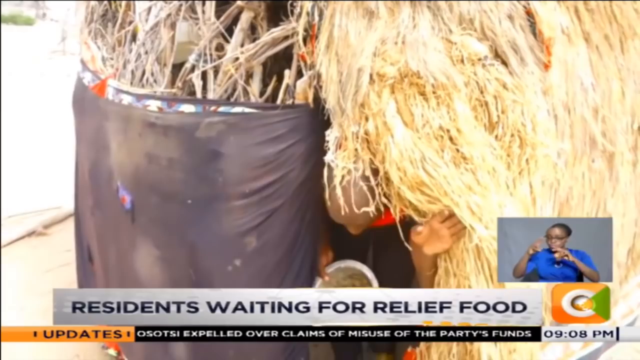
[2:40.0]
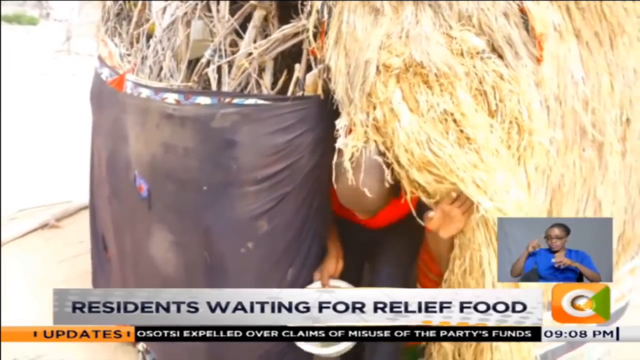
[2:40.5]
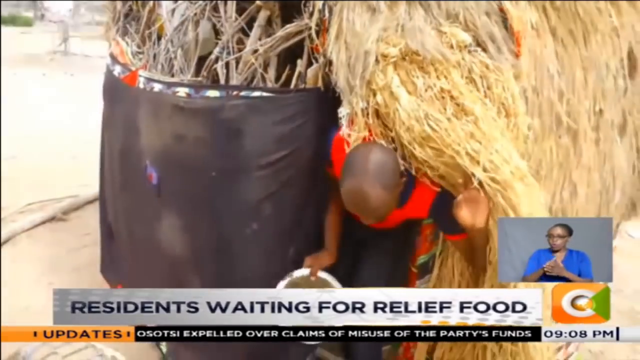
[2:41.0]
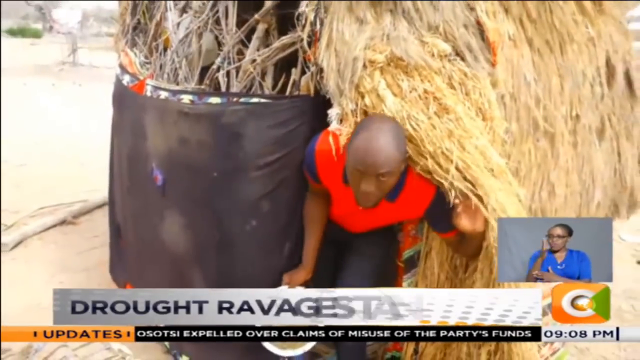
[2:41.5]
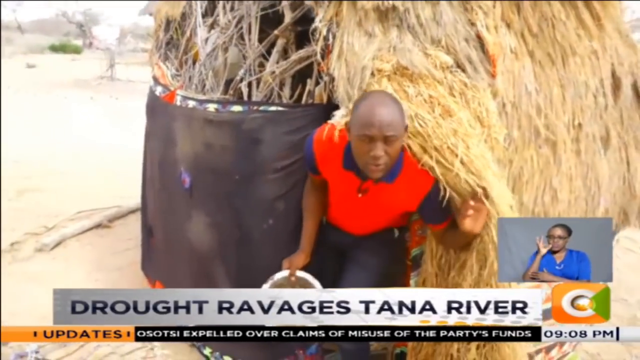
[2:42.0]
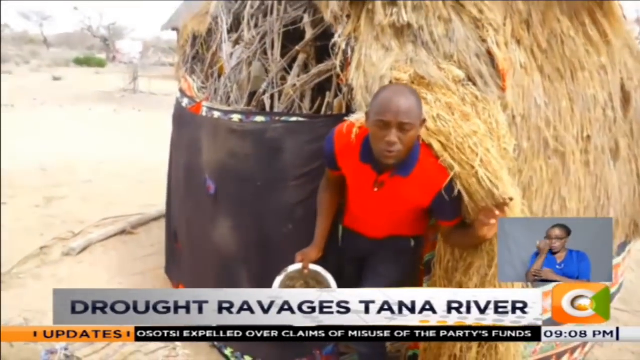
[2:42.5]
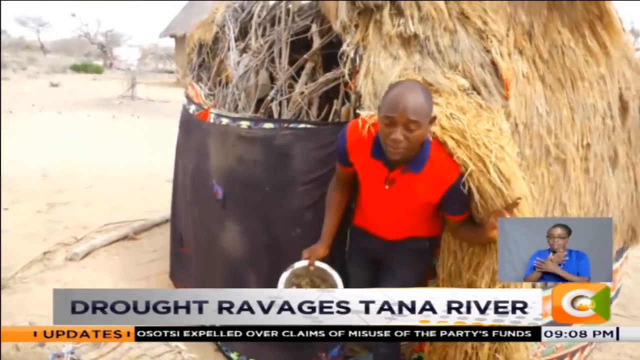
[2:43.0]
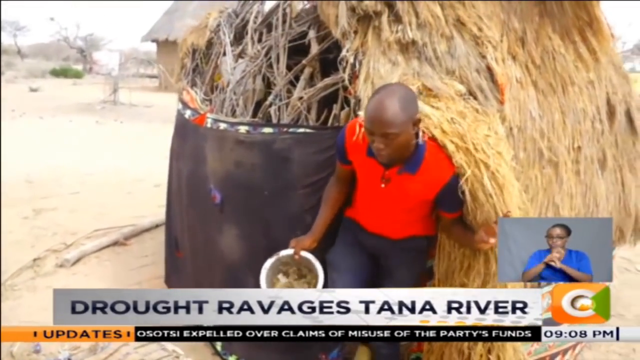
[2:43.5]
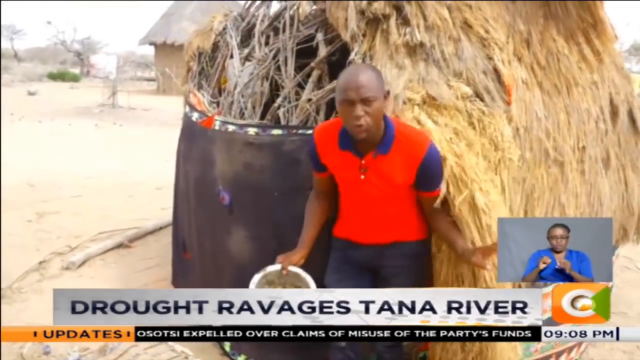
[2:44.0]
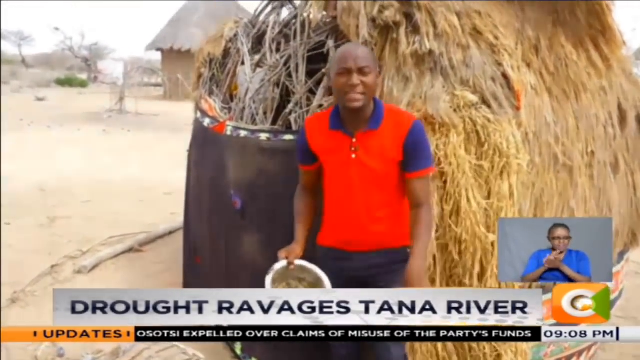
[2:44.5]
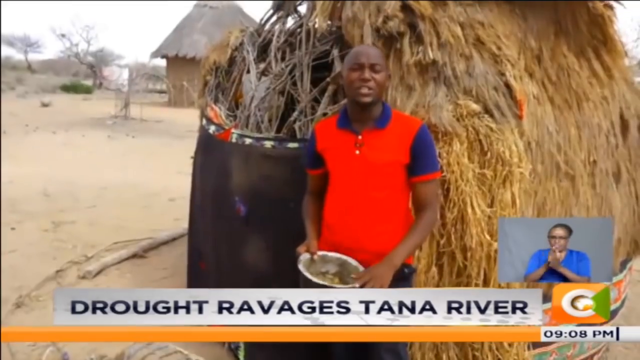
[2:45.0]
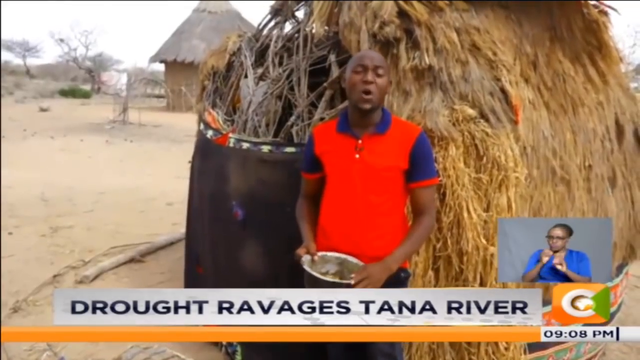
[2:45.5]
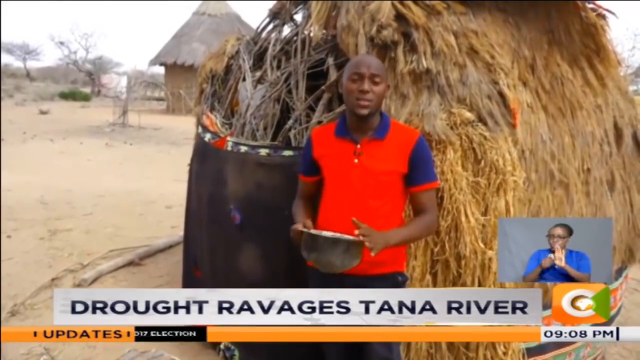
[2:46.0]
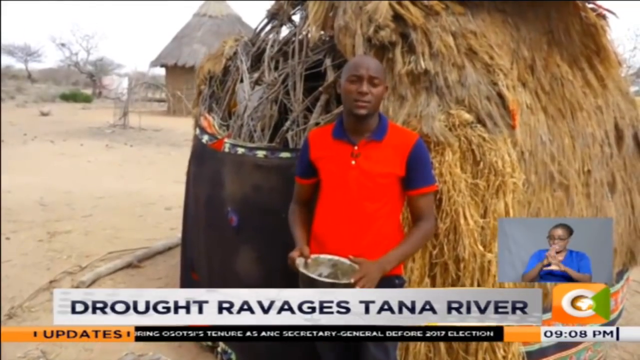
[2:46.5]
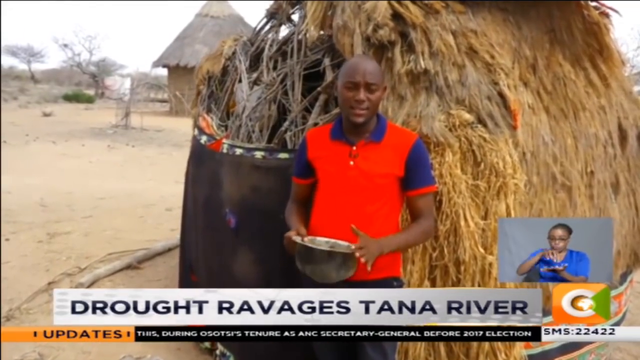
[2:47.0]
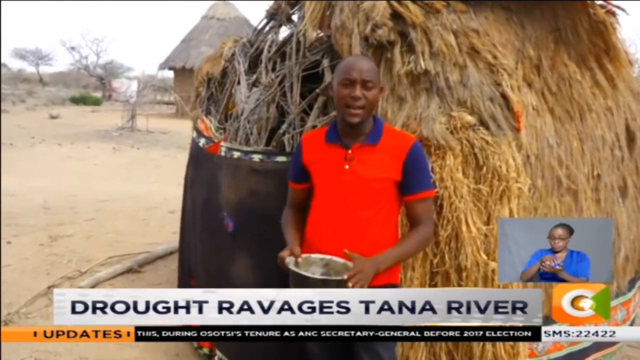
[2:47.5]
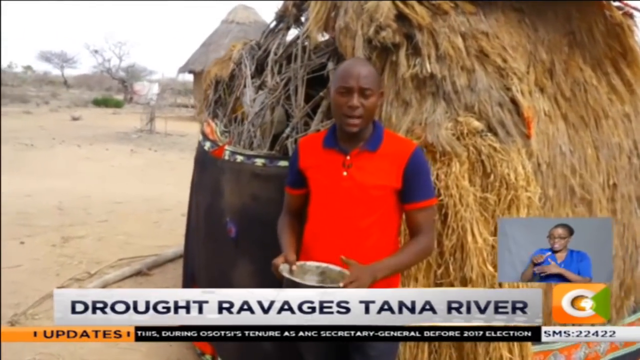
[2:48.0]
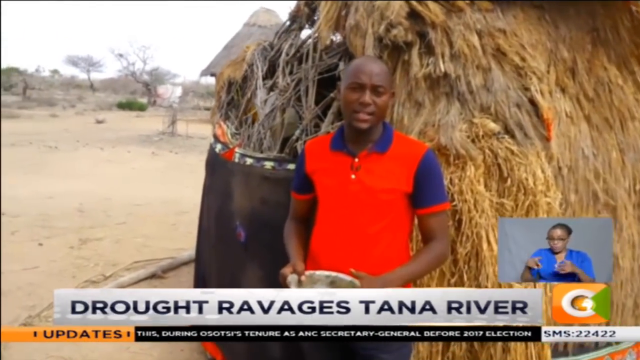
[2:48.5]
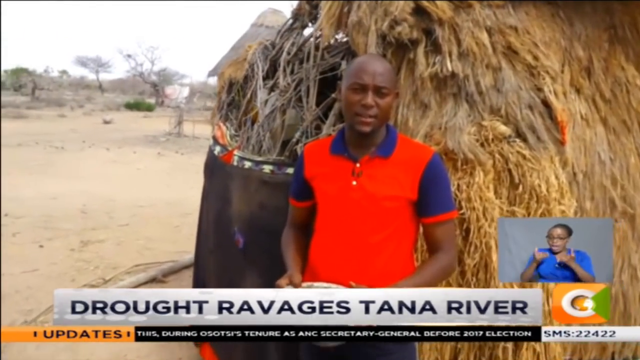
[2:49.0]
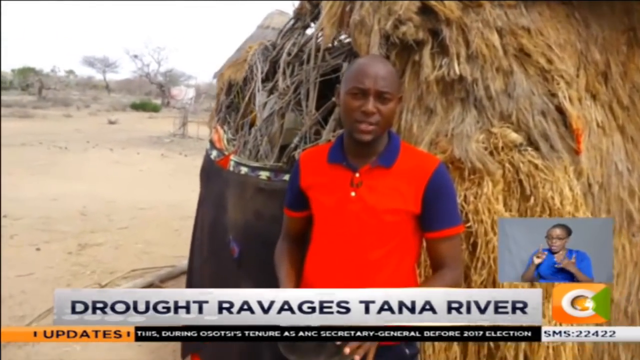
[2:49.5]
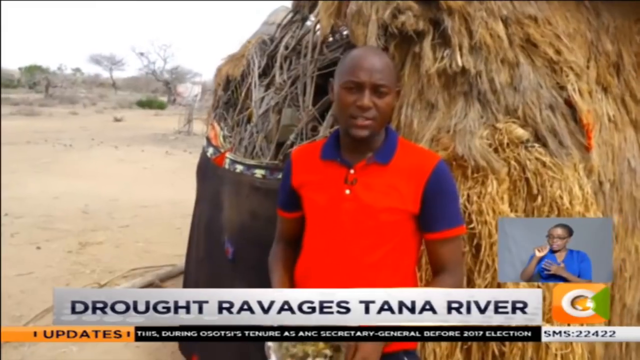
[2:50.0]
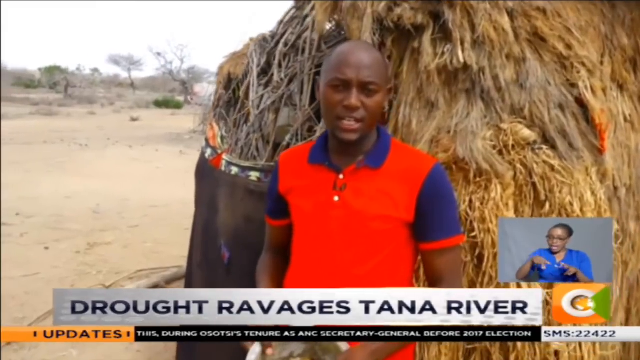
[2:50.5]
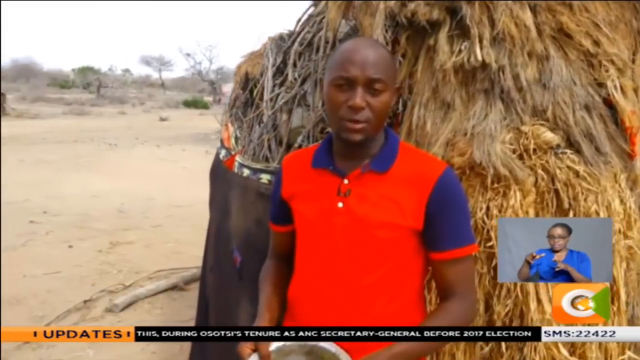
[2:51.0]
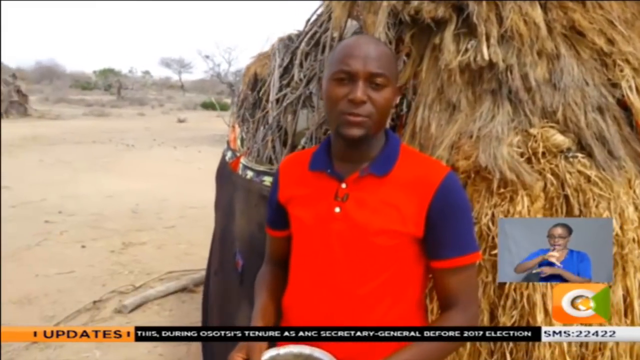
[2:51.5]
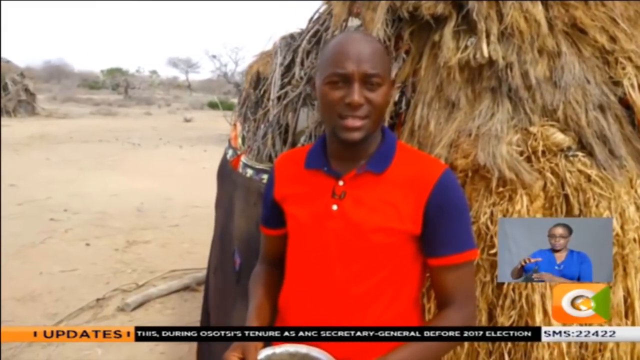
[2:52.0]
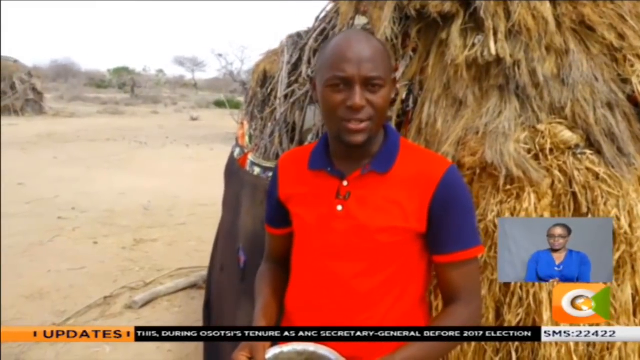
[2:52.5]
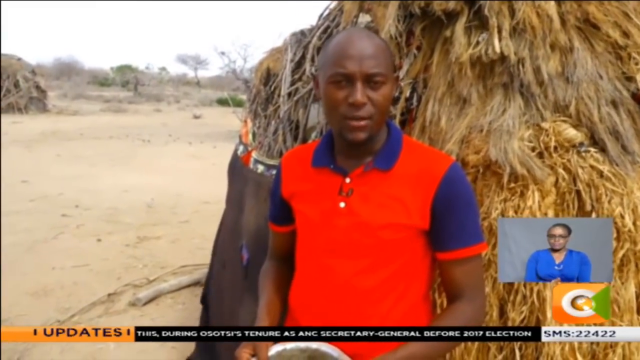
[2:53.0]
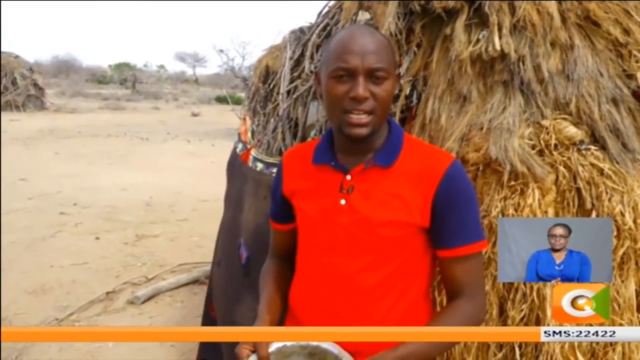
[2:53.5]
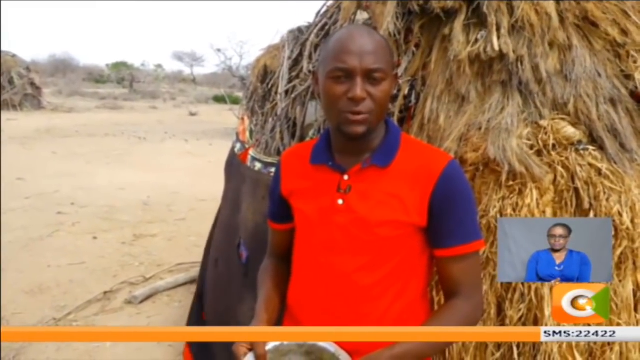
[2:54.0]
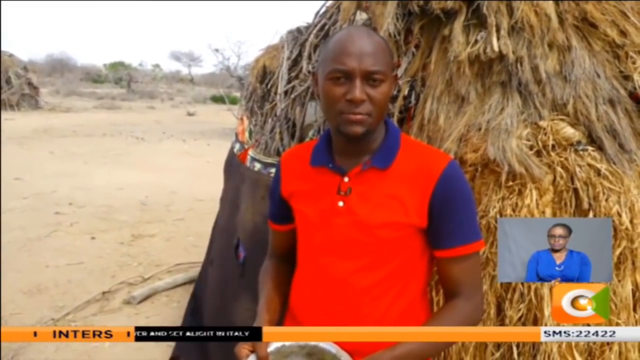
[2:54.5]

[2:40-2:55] The reporter walks out of the hut and stands up. He wears a red shirt with a blue or purple collar and sleeves and a red cuff at the end of each sleeve. He seems to be finishing what he wants to say and signing off while the camera slowly moves toward him. The sign language interpreter, in a blue shirt, continues in the bottom right of the screen until the very end. The reporter looks very matter-of-fact but also very somber. Behind him on the left is a hut, along with various trees out in the desert area.